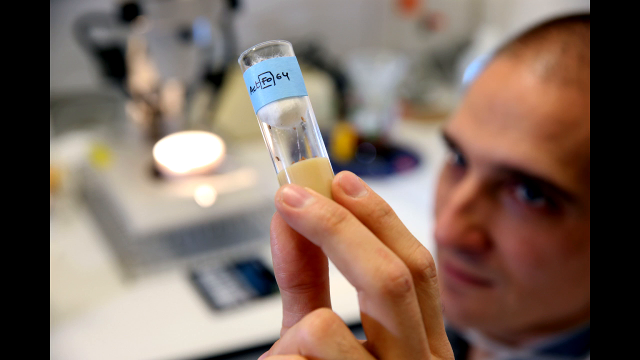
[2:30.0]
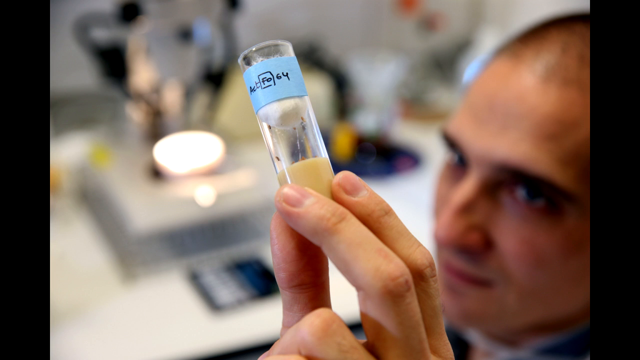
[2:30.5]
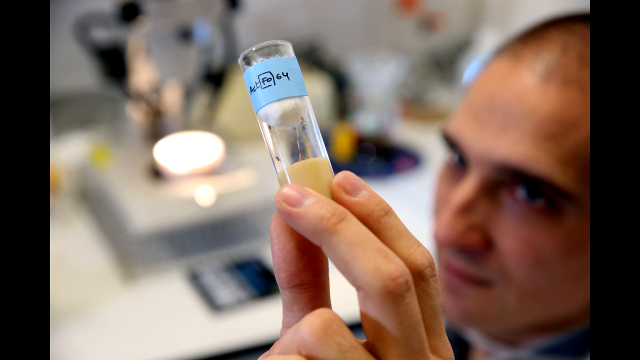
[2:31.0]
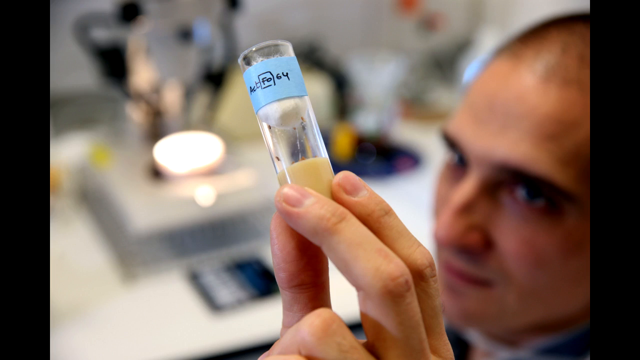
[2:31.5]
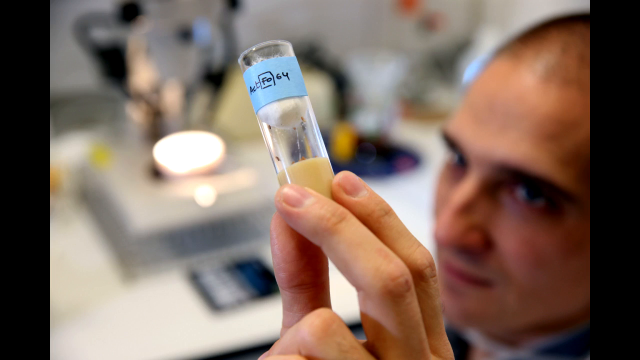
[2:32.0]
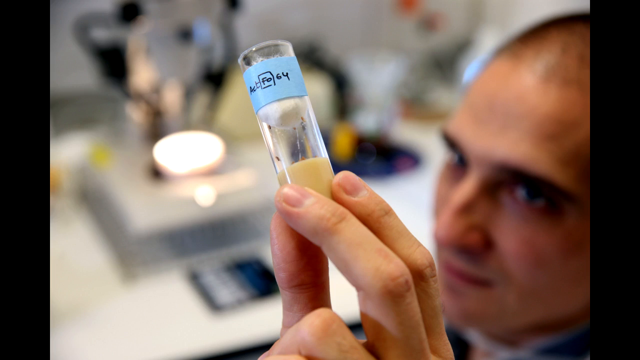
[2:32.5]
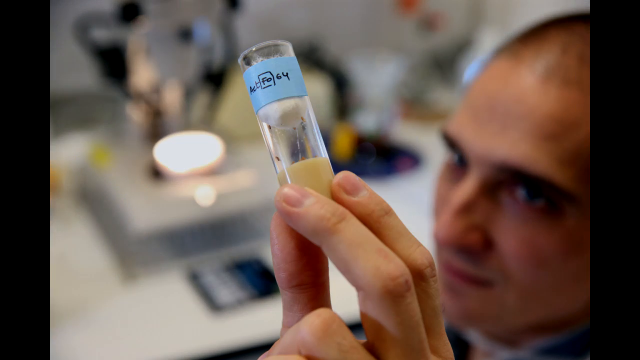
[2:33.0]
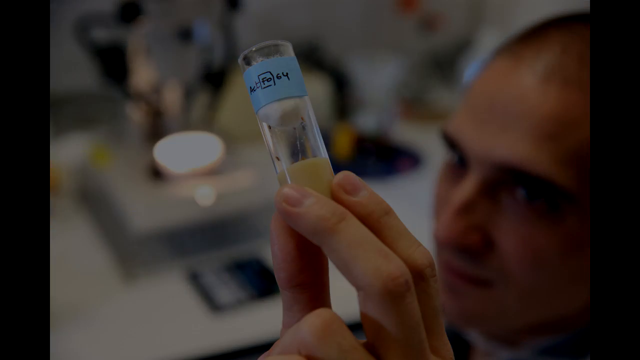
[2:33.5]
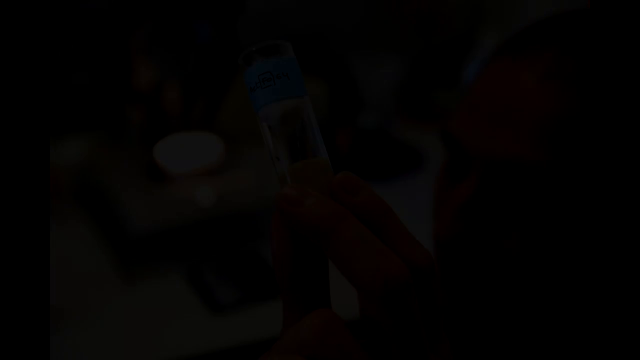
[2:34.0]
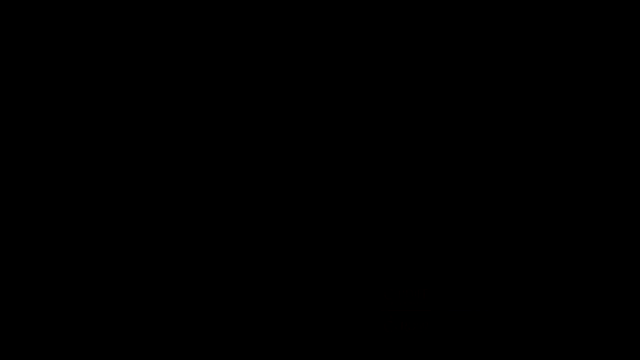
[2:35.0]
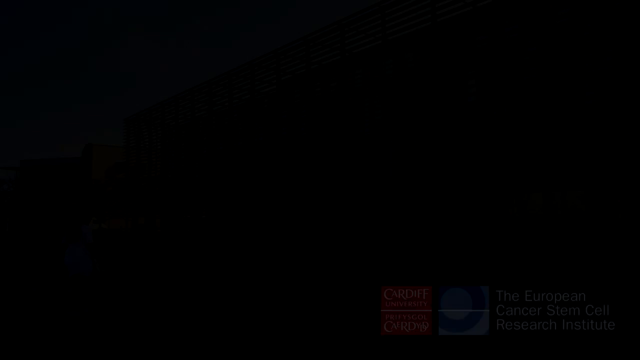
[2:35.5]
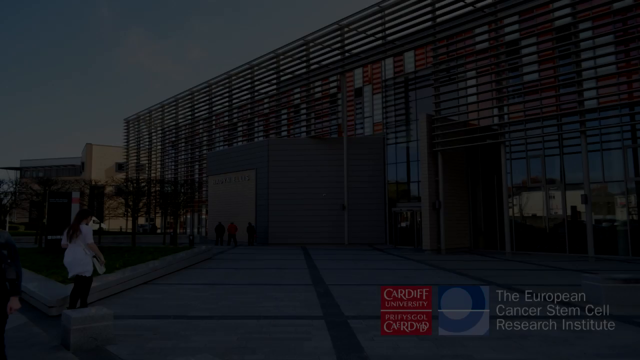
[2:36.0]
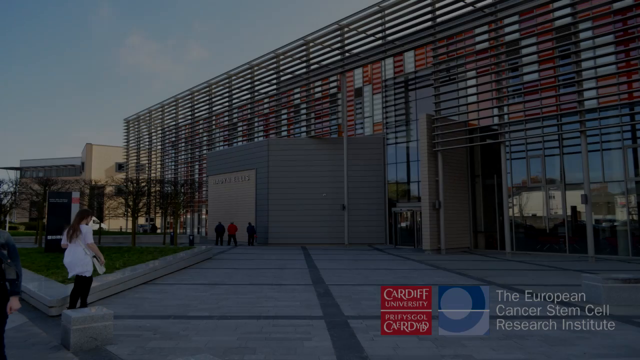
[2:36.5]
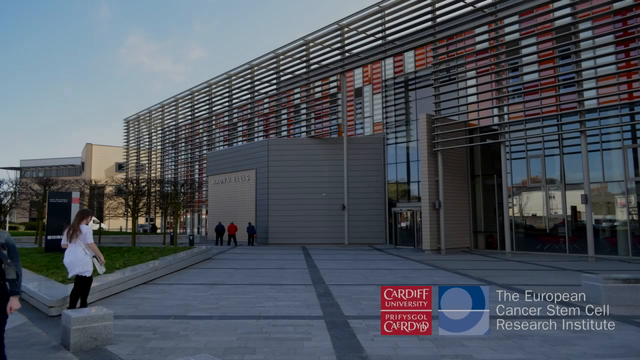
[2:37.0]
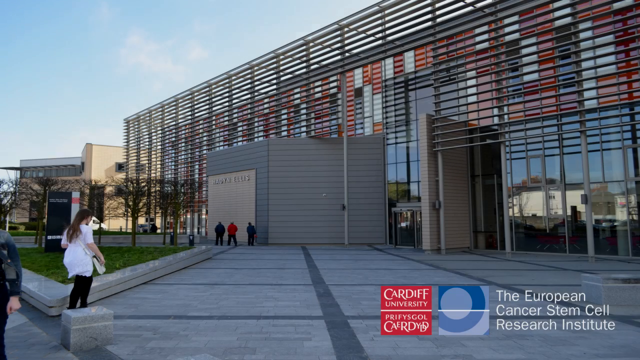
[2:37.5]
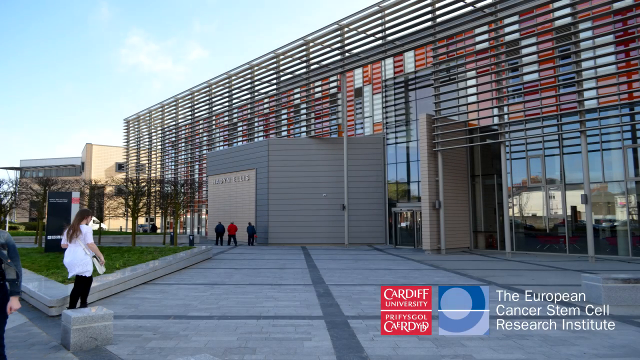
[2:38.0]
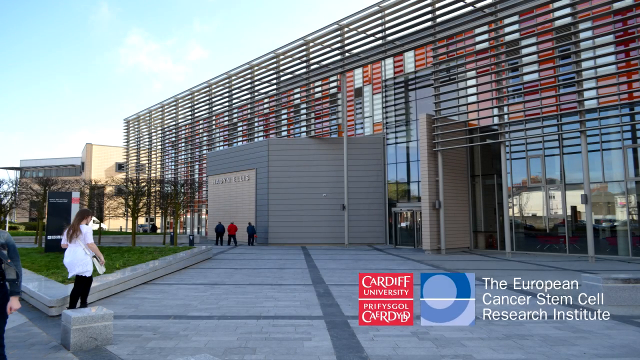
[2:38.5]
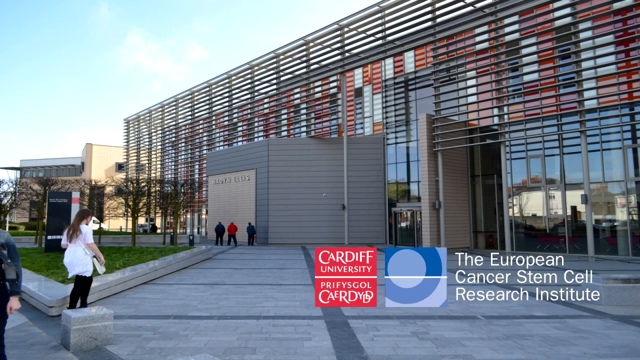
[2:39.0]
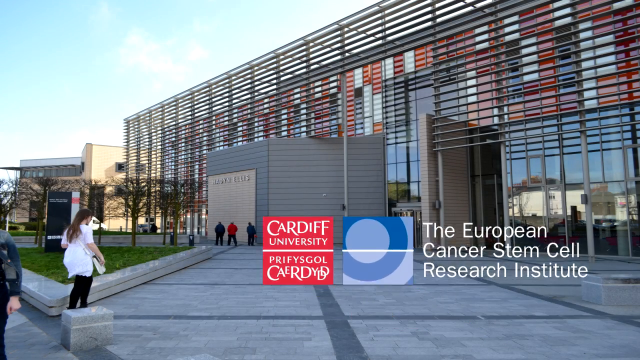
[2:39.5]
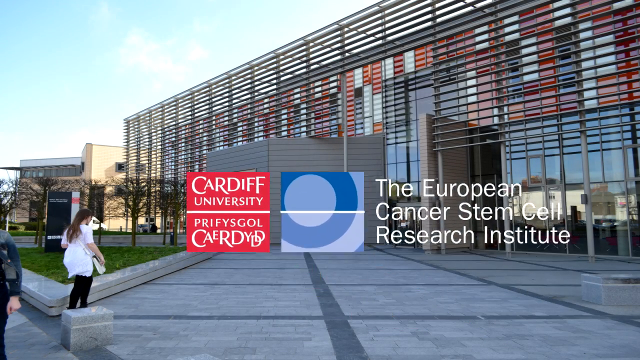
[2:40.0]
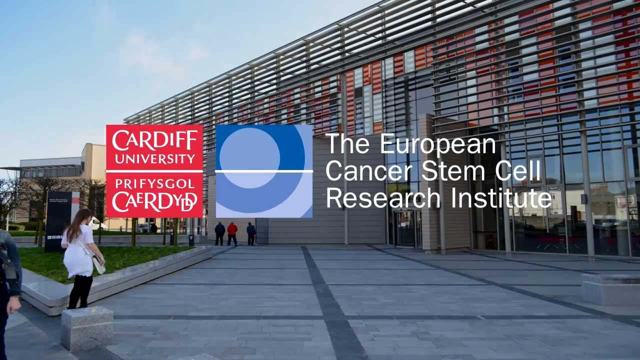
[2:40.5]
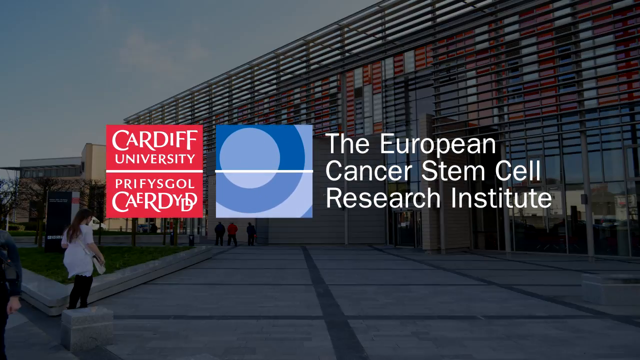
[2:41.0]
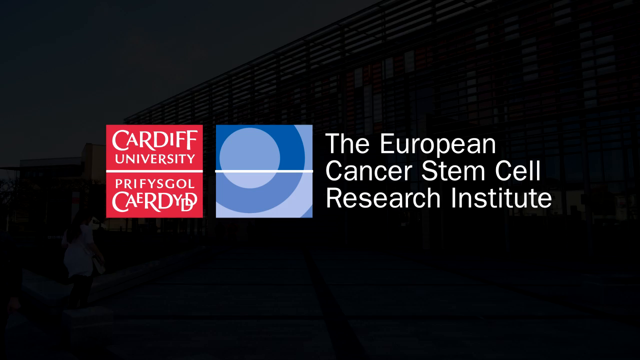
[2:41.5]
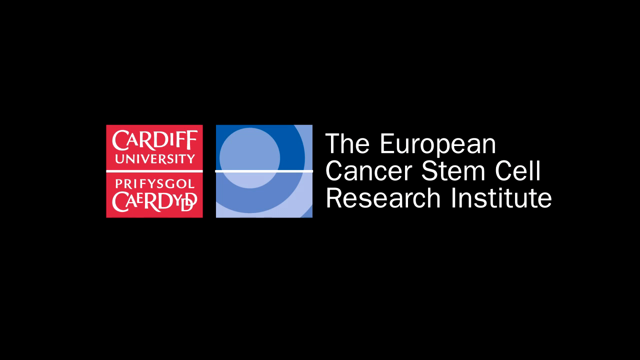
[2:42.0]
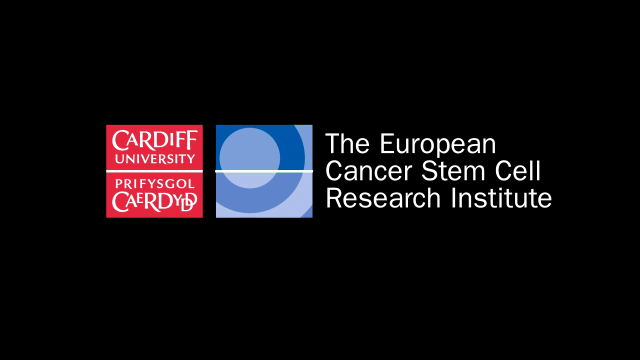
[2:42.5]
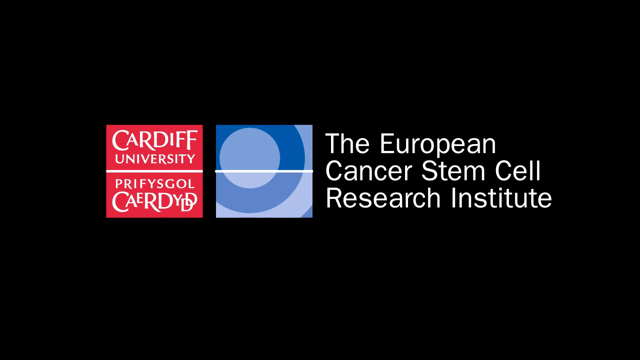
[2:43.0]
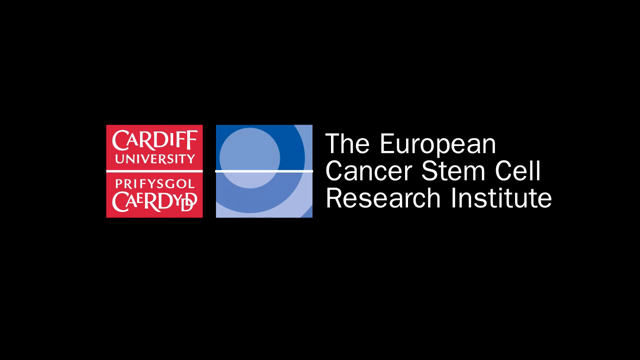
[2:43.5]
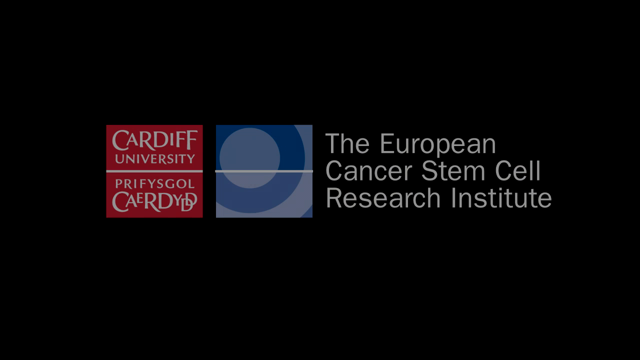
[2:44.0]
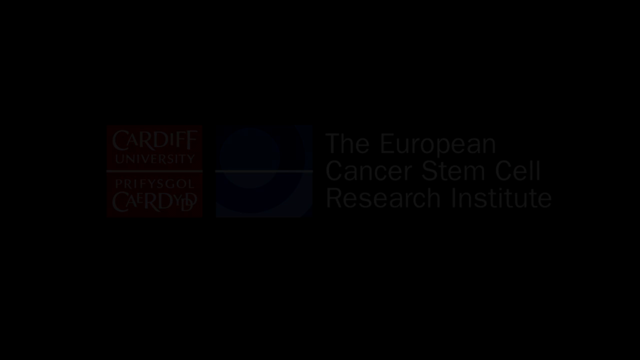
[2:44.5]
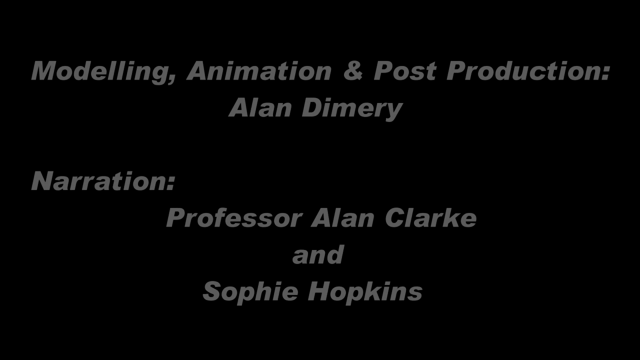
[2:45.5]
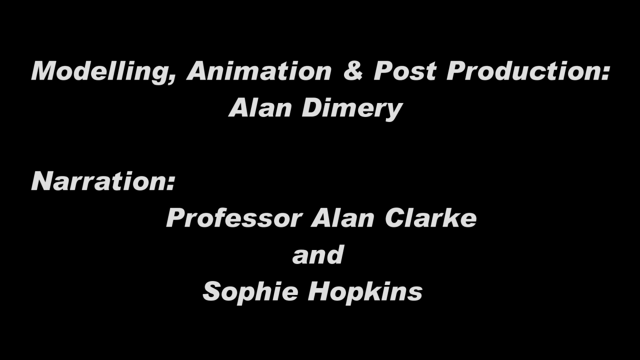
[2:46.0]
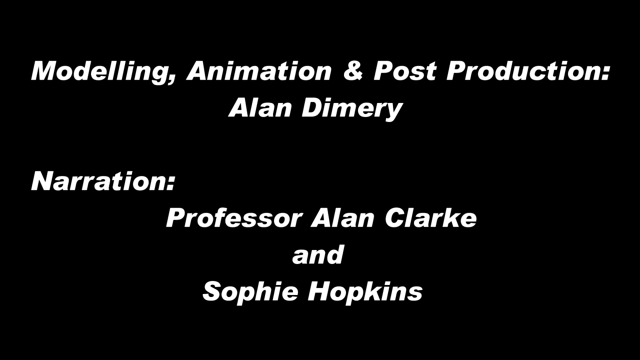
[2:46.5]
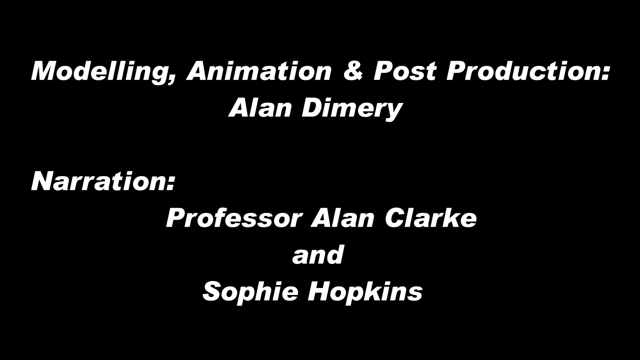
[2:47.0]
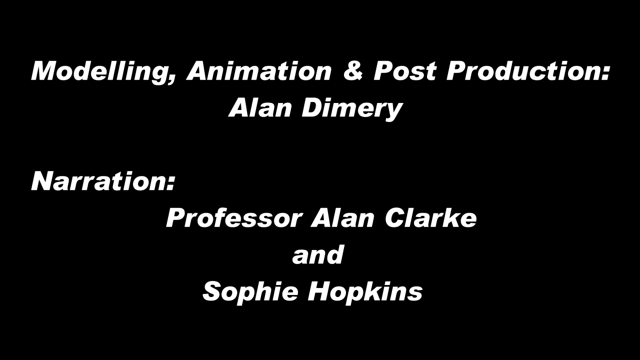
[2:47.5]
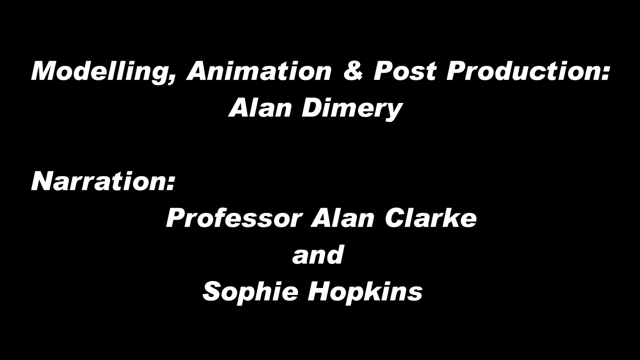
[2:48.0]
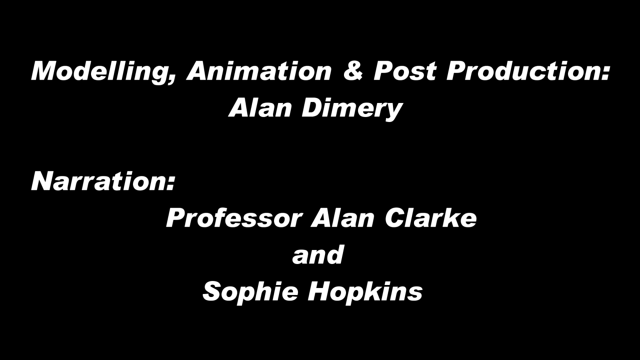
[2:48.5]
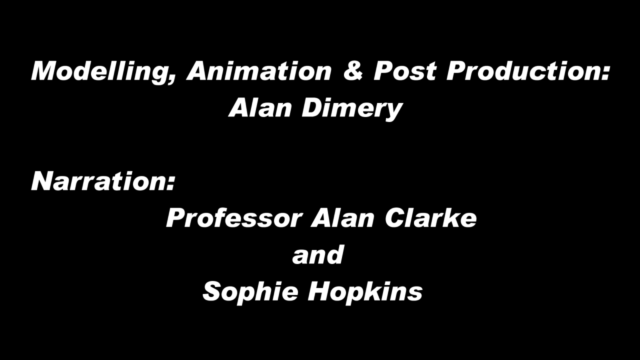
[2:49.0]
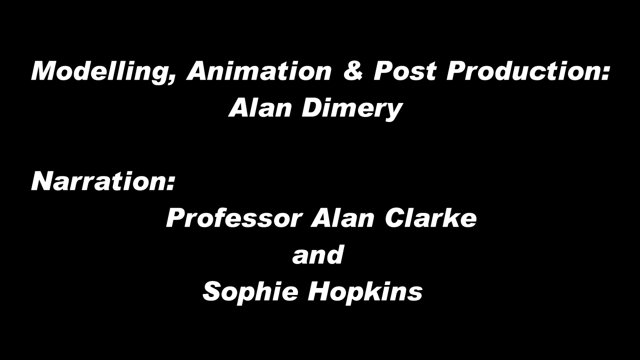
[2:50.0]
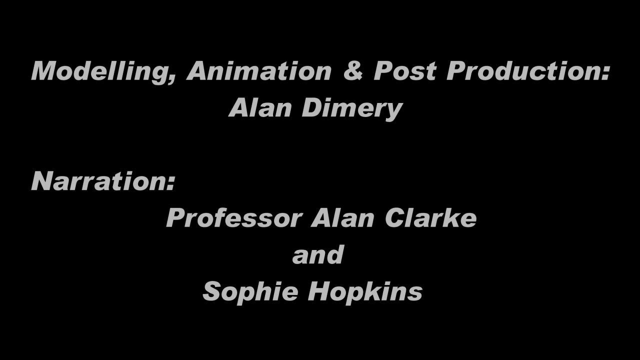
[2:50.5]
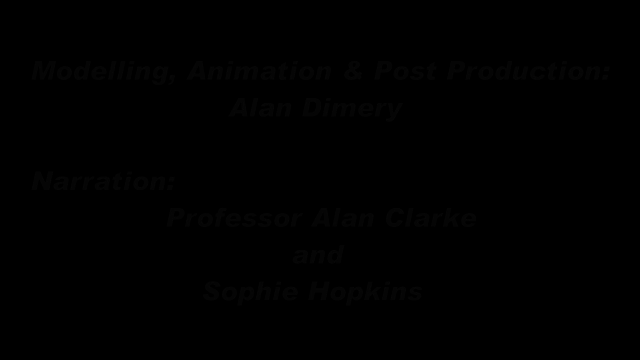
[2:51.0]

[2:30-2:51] Another person in a lab holds up a glass test tube. The top of the tube is labeled in black pen on a blue piece of tape, and a piece of cotton is stuffed into its top. At the bottom of the tube is a tan liquid, held up to the light so the scientist can observe it better. The image from the beginning, of the outside of the European Cancer Stem Cell Research Institute, appears again, with students or people walking around the campus. The building has large windows in the front and red and white panels on the outside. The Cardiff University and European Cancer Stem Cell Research Institute logo moves to the center of the video and expands before the background picture fades out to black. The video ends on another black screen showing information about the people who made the video.